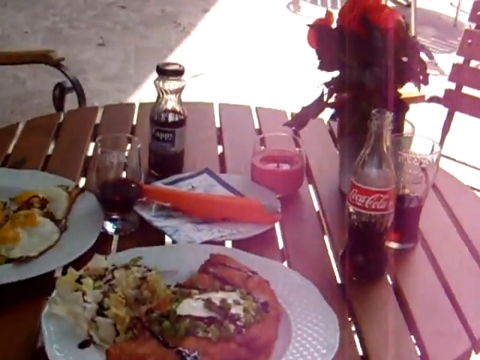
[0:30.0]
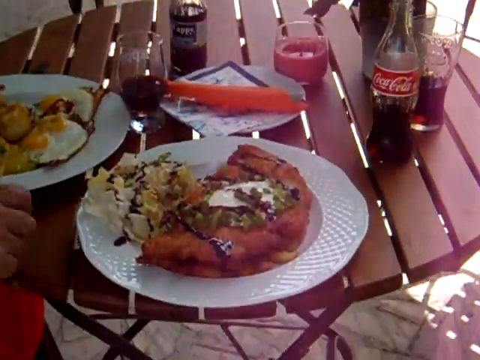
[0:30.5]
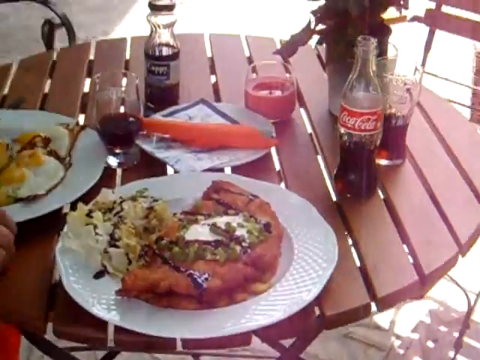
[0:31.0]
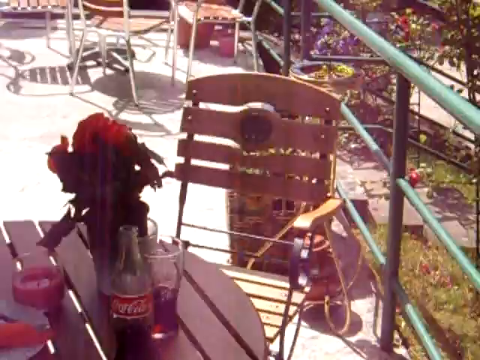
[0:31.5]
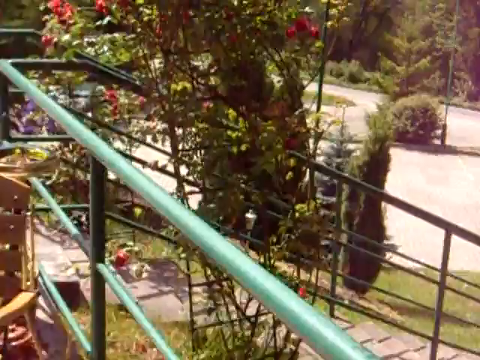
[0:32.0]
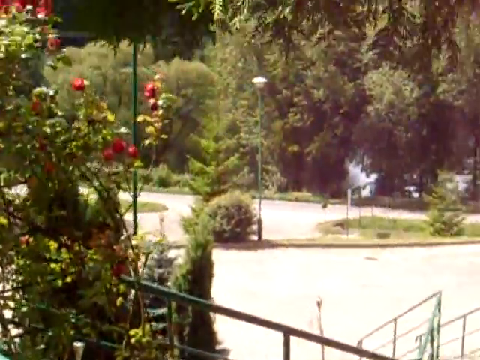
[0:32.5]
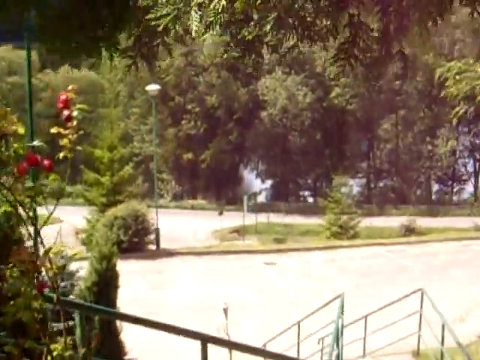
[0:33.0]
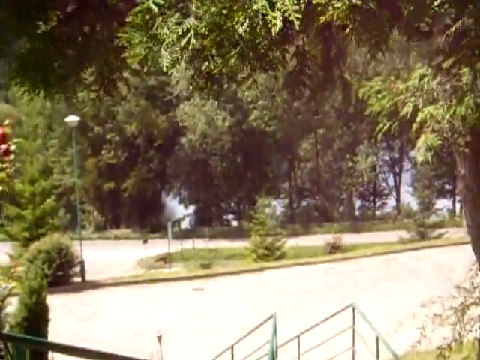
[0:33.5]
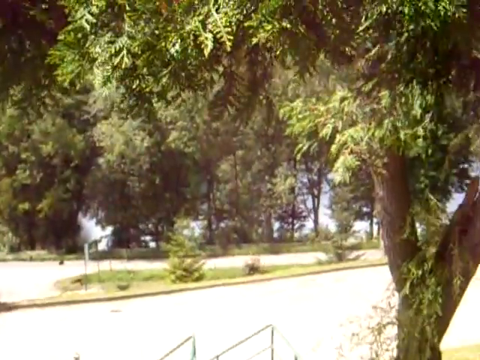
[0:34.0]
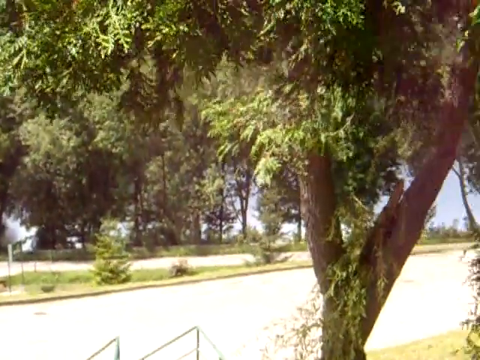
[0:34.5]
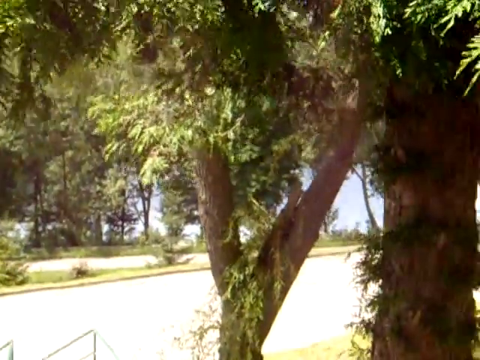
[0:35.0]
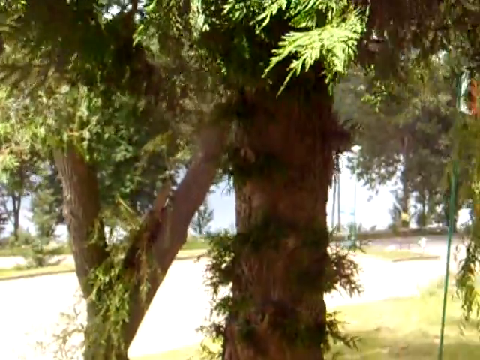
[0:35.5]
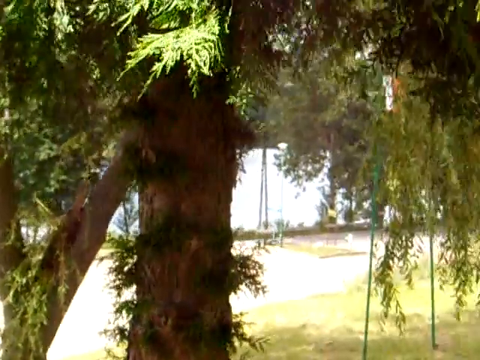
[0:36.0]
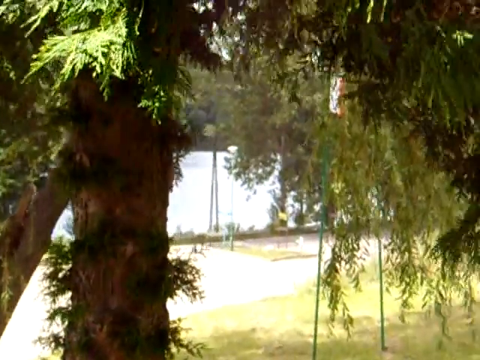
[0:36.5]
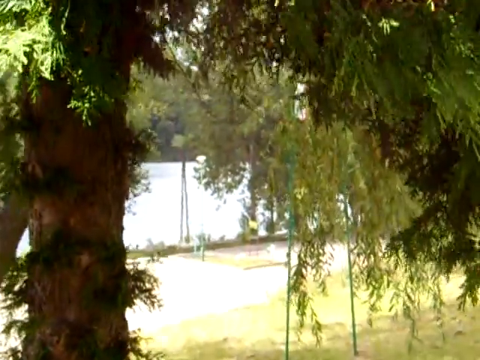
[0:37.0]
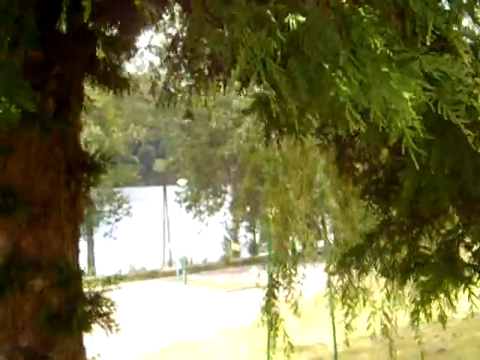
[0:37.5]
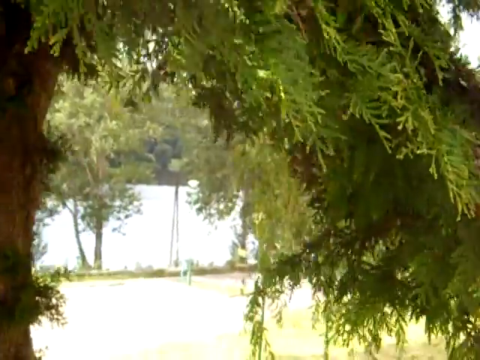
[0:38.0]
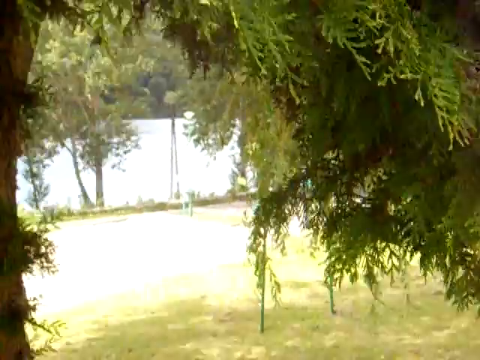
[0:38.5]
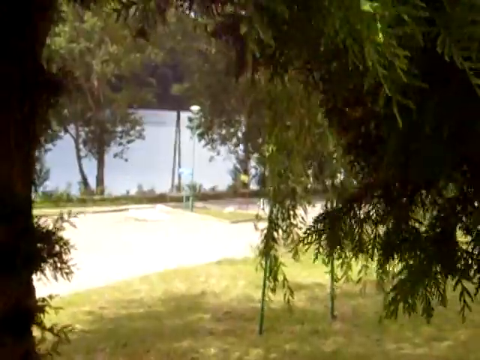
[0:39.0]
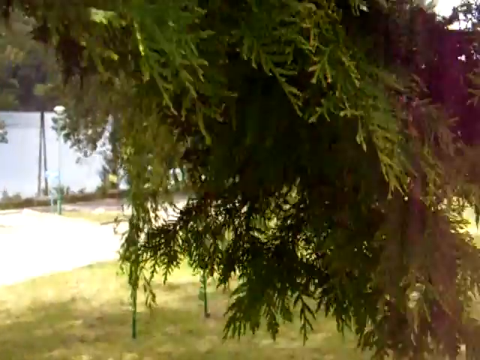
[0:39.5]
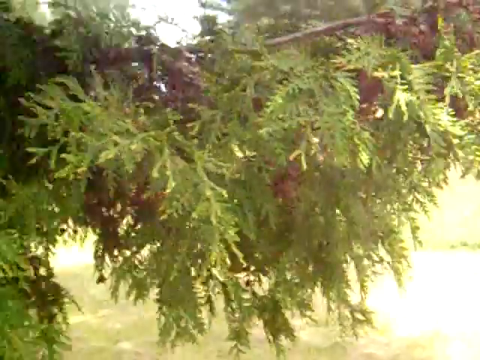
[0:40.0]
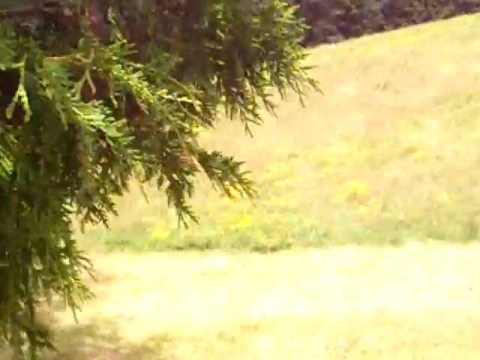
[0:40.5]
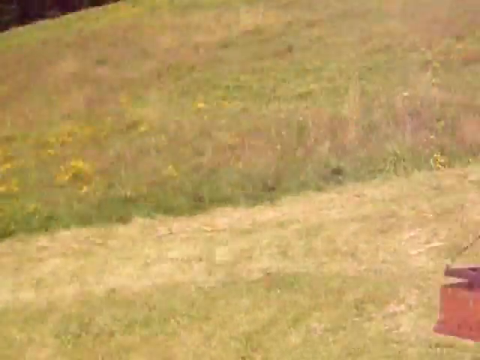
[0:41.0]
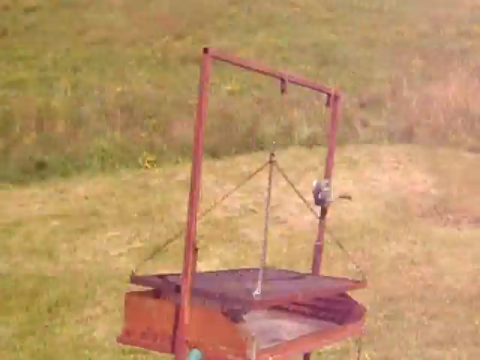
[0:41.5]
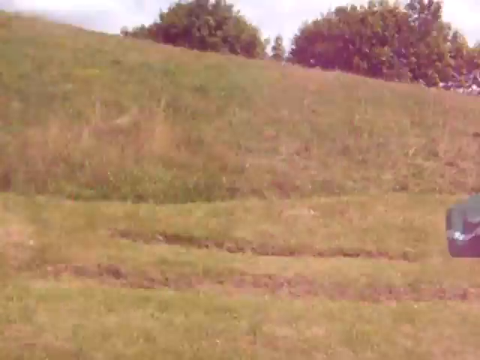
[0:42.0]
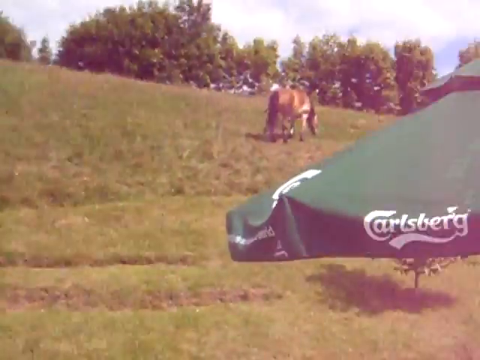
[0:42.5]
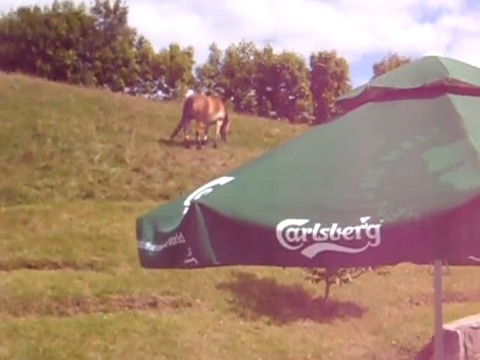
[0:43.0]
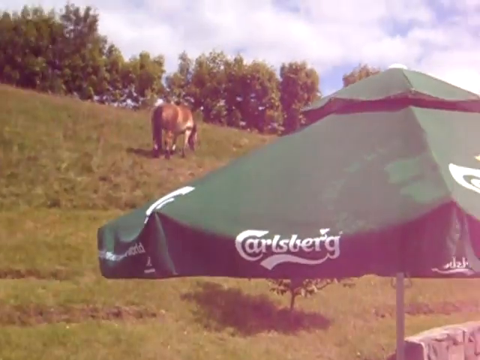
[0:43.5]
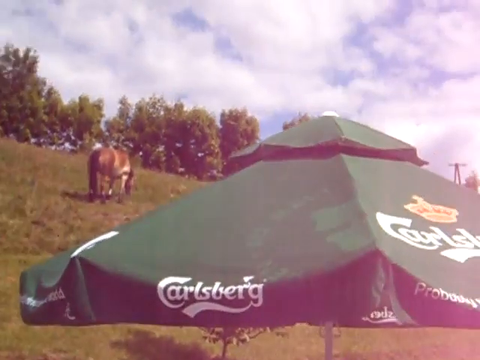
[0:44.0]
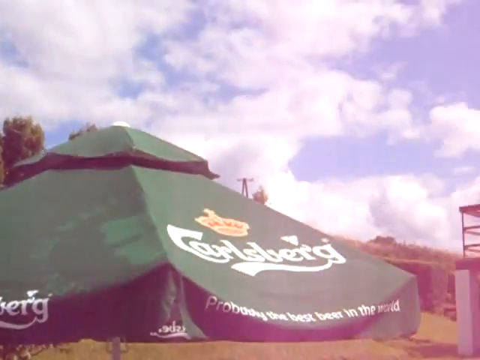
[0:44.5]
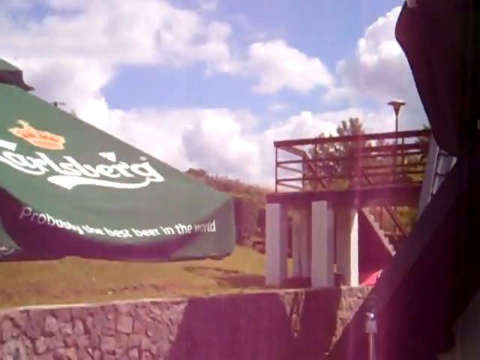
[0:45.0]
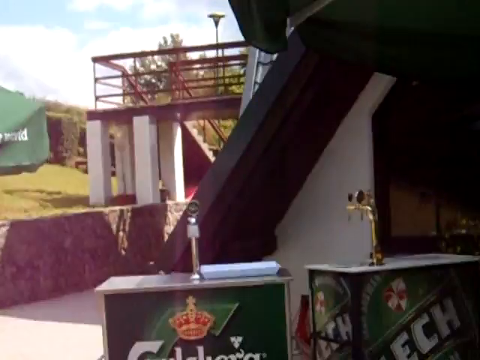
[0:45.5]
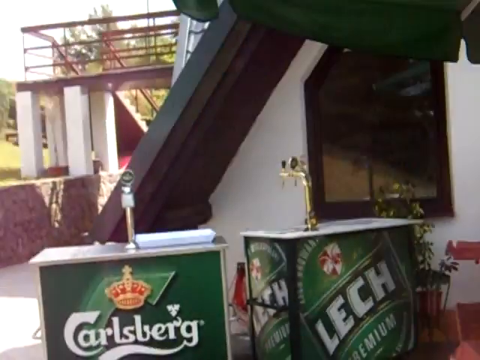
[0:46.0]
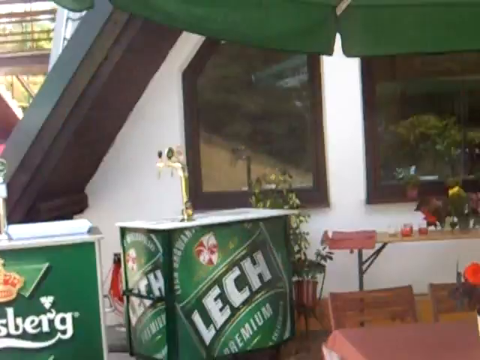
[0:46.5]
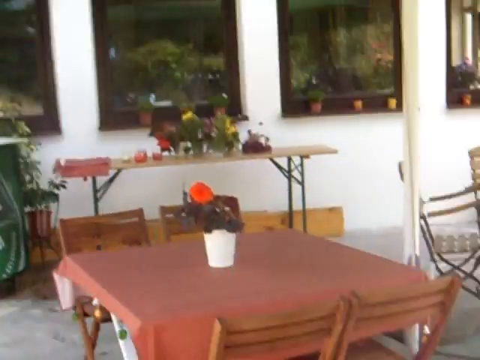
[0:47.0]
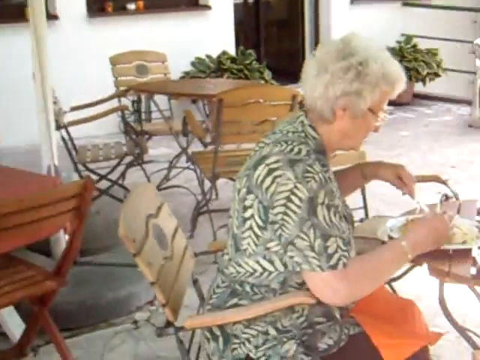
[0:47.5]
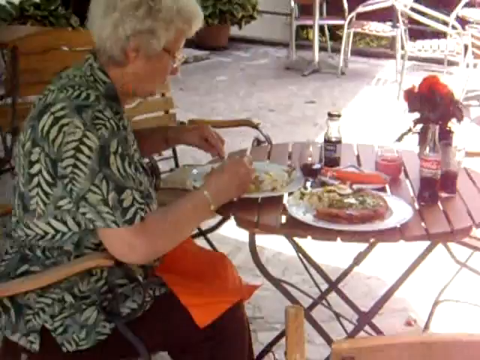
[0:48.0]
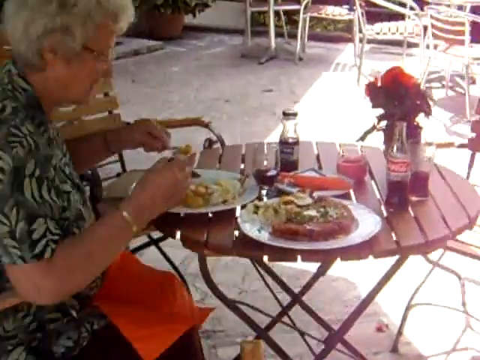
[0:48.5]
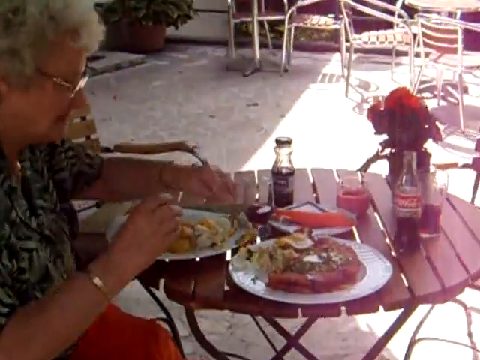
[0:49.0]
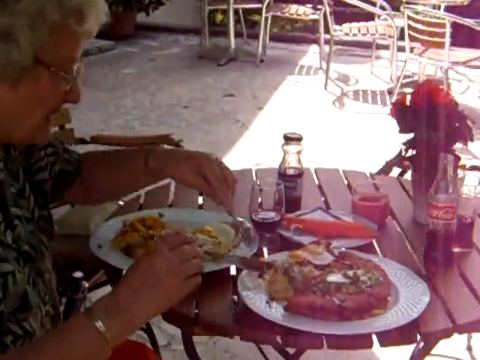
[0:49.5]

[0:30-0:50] The camera does a 360 turn in a whole other direction, showing greenery outside and lawns. As it starts rotating, green rails appear, along with a bush with red flowers and a big tree that looks like a pine tree. A horse comes into view, apparently just eating grass. There is a green tent and green containers with branding on them, apparently a beer logo. A lake seems to be visible even further back.